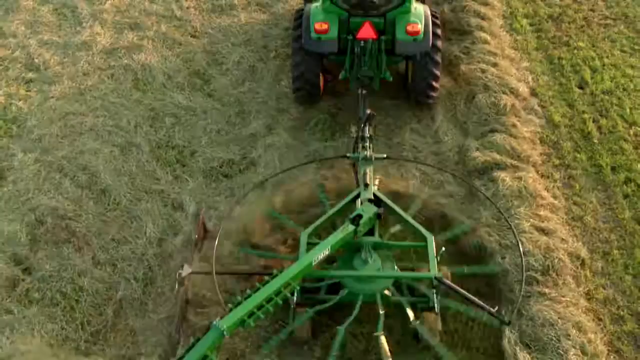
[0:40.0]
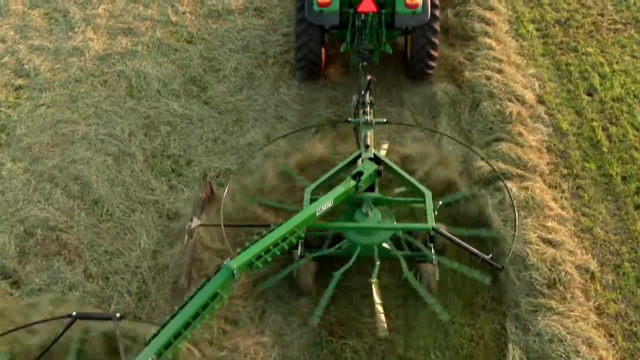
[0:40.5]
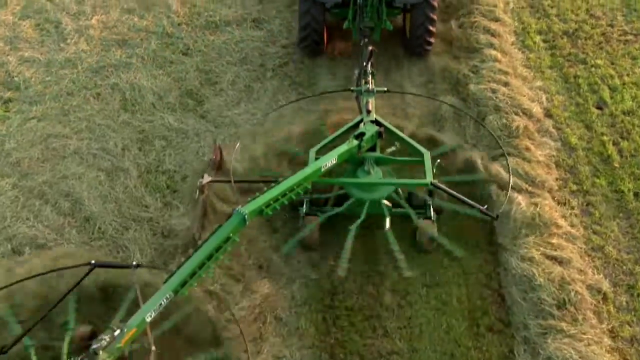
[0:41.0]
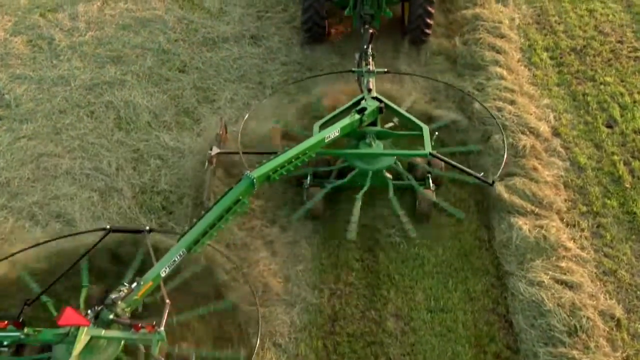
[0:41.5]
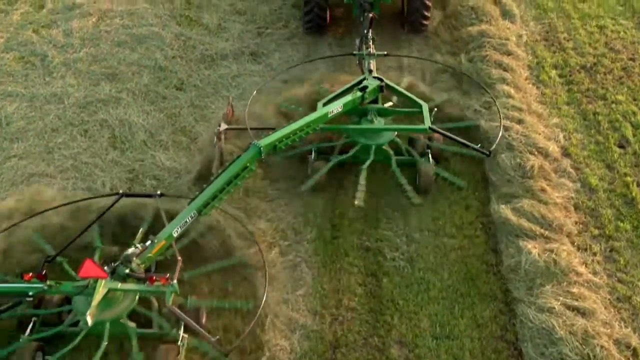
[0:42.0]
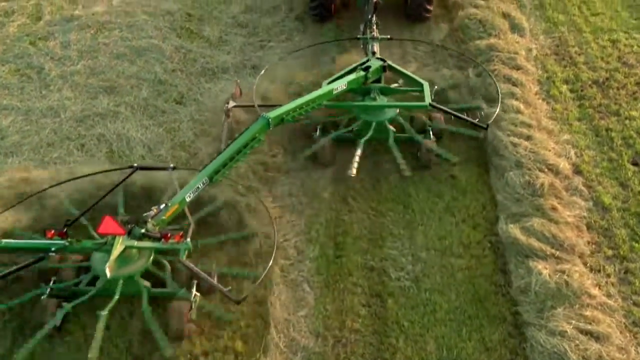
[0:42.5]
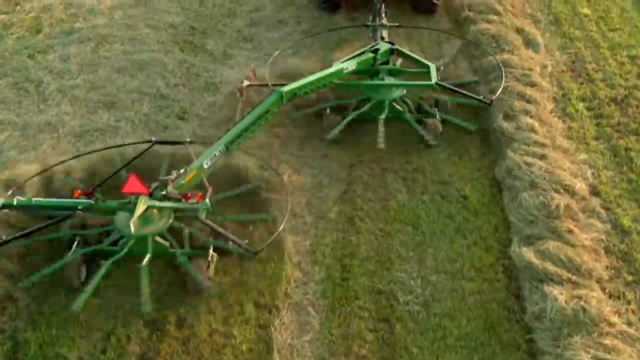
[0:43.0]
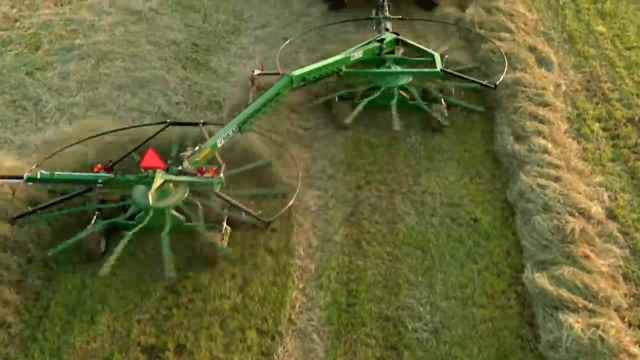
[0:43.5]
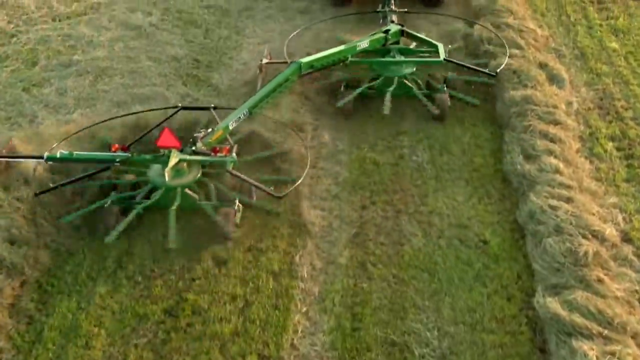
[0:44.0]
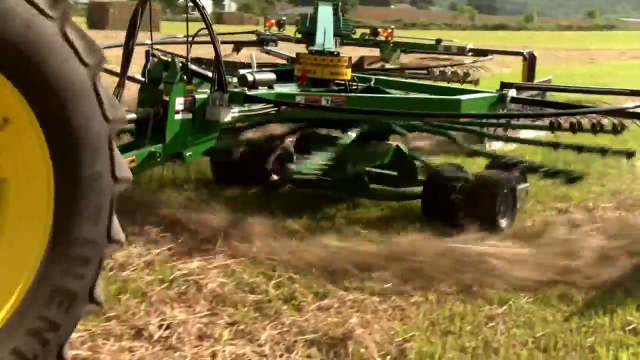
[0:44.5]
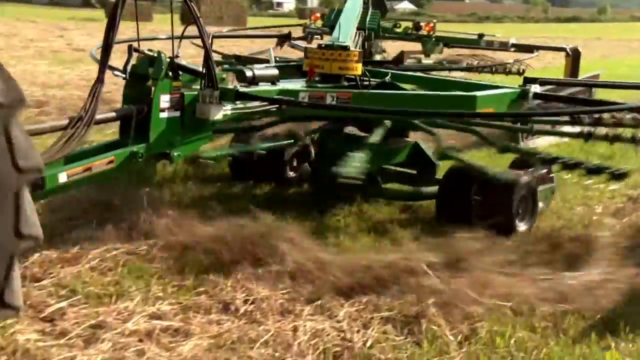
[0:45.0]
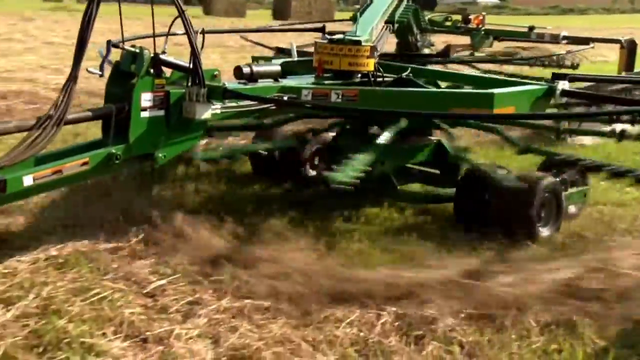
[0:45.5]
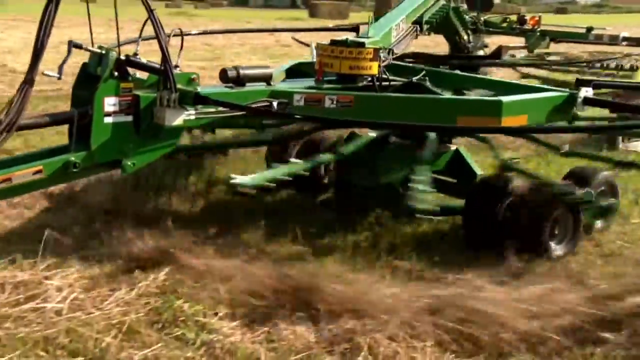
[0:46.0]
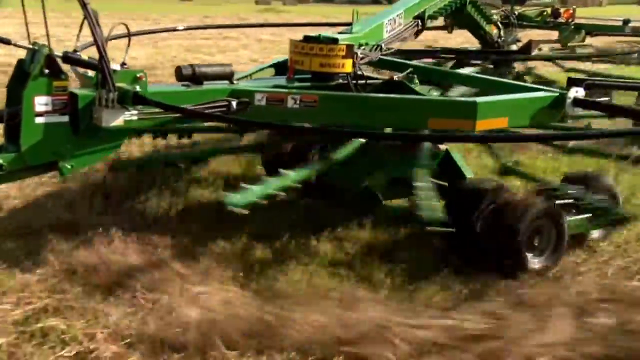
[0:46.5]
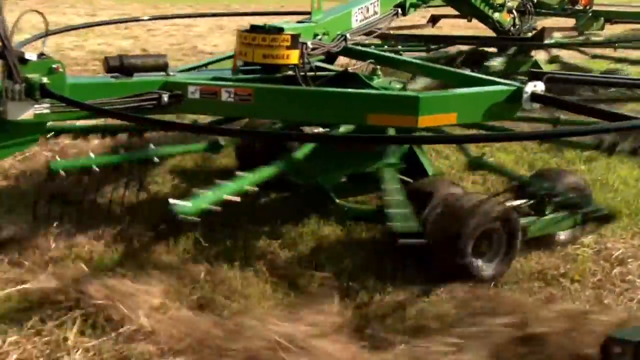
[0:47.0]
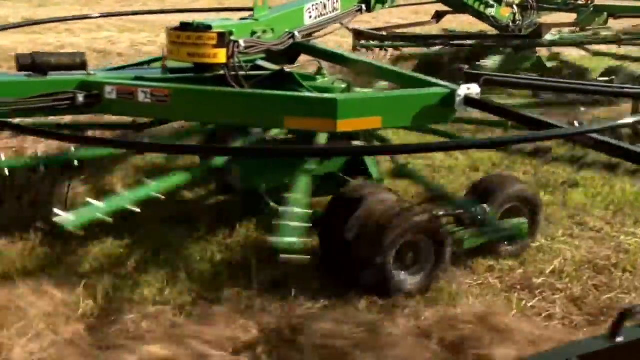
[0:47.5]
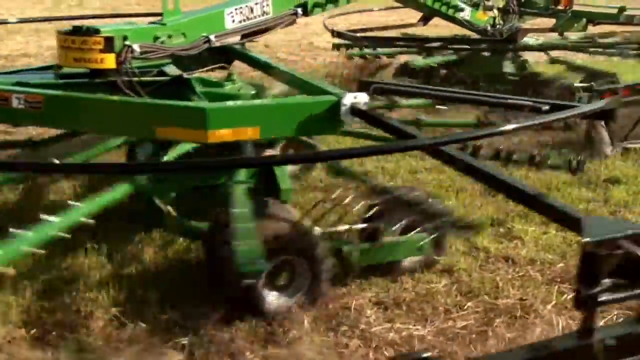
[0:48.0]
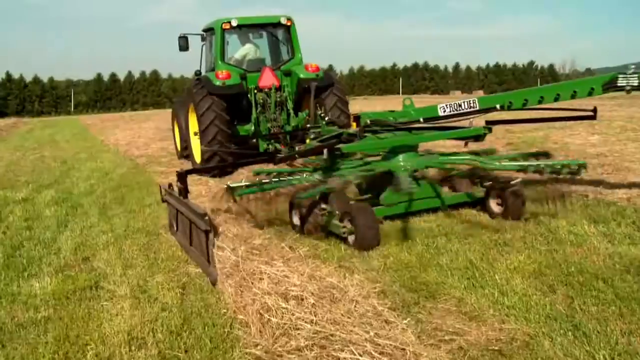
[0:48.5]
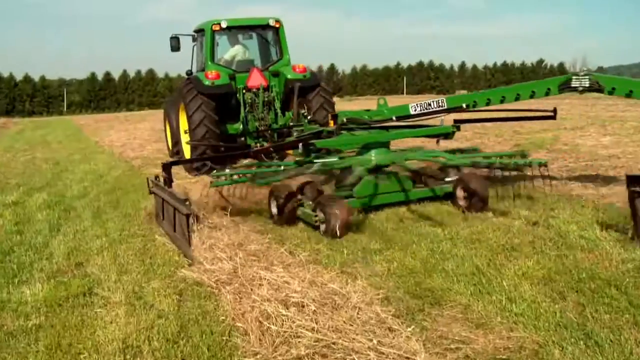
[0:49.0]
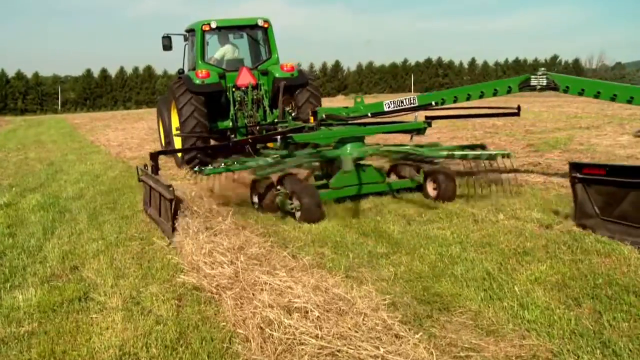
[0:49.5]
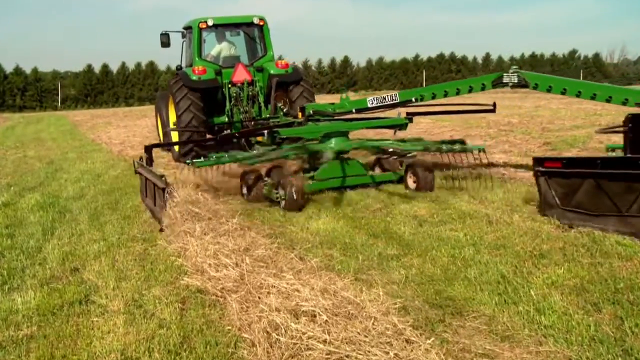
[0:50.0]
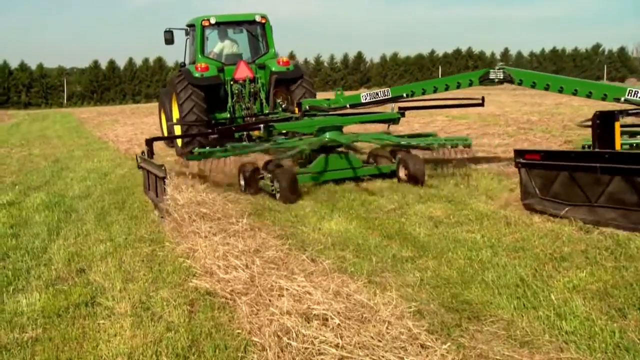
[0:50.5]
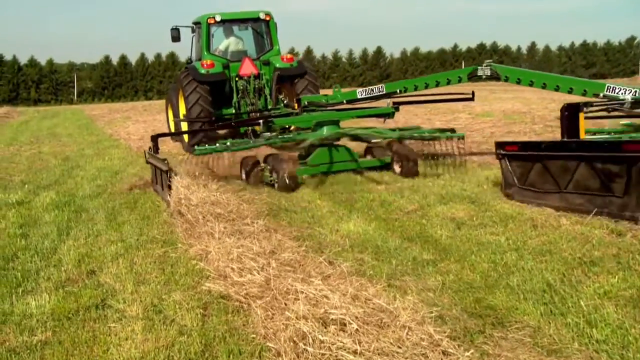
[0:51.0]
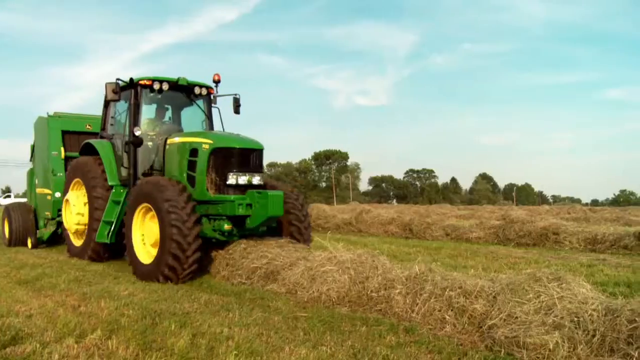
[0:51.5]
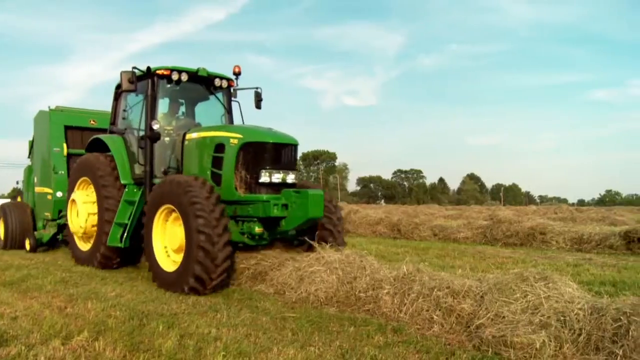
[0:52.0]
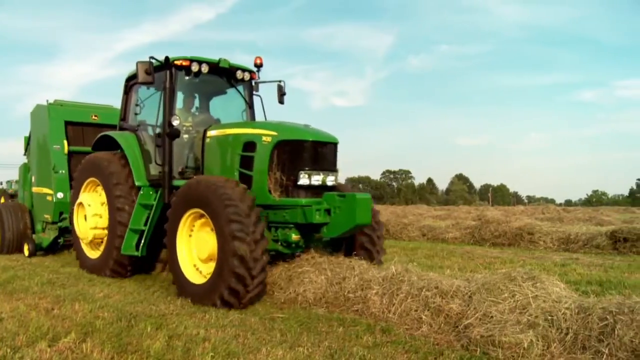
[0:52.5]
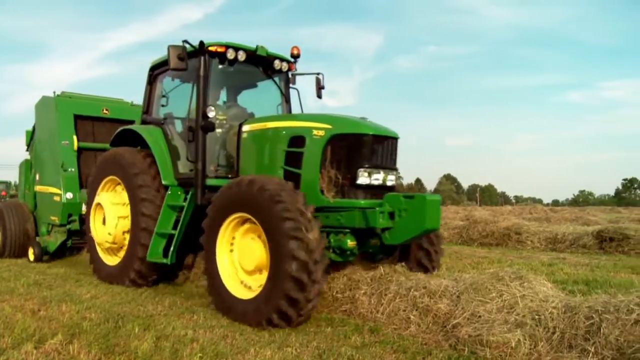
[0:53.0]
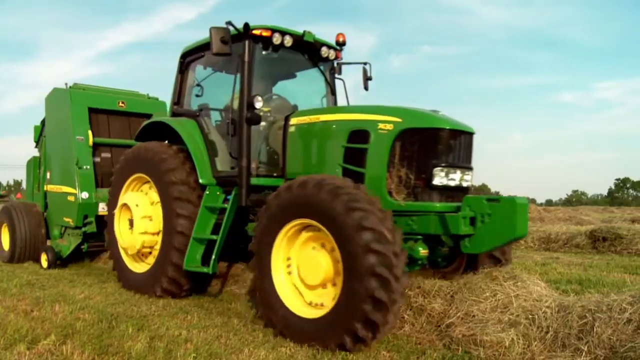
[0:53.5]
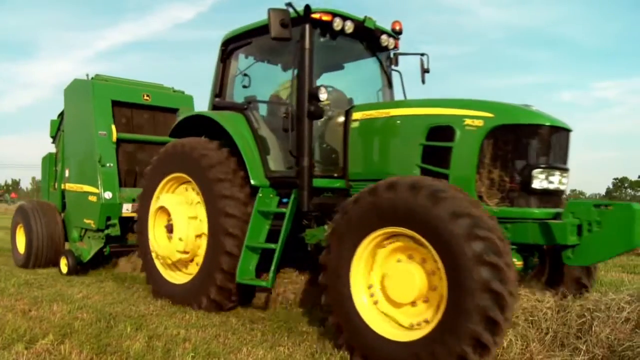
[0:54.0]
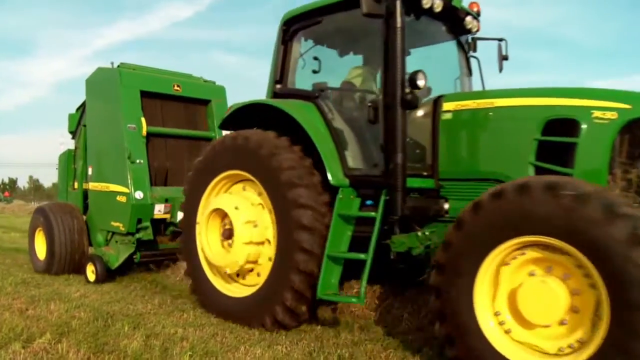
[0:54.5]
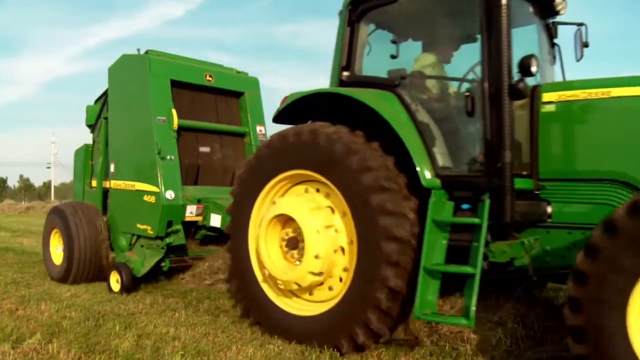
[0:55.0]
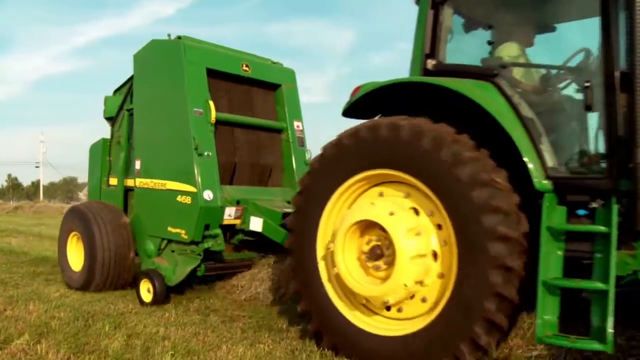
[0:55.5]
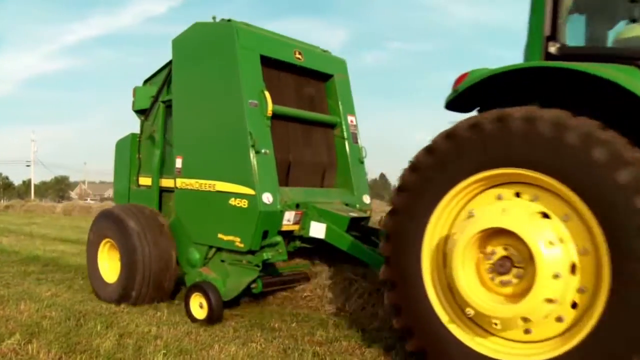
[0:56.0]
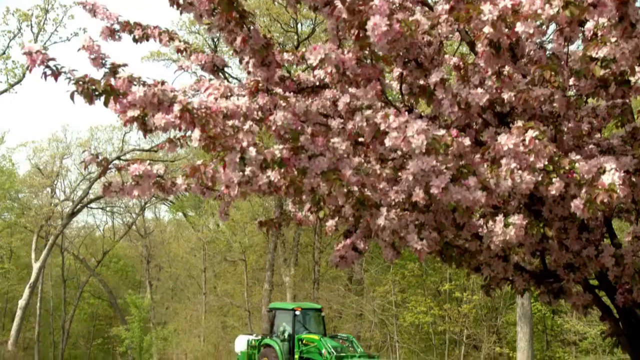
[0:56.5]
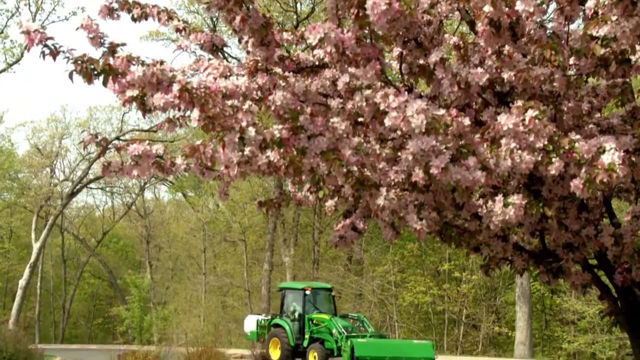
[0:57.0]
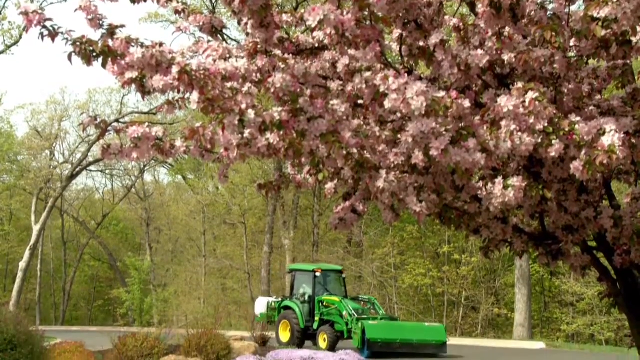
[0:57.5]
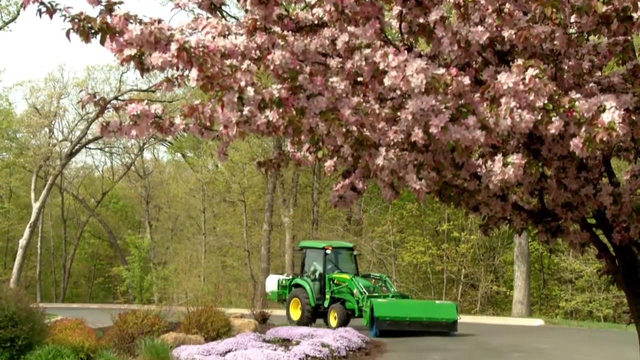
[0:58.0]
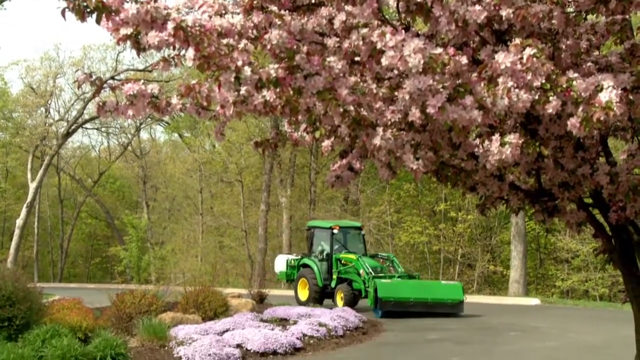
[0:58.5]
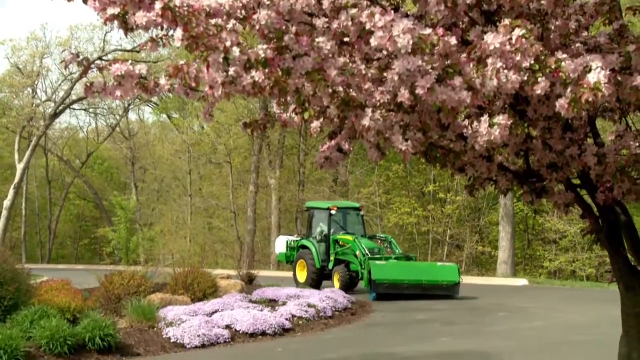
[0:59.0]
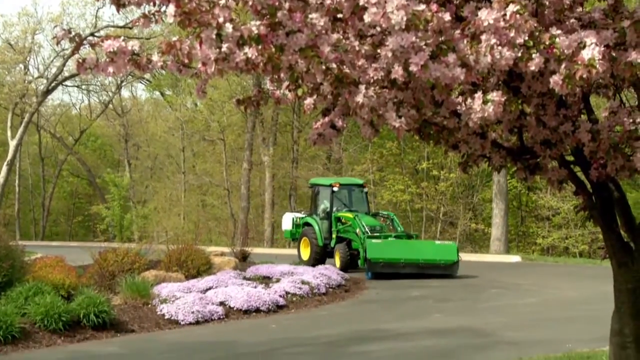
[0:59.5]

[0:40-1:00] A tractor drives through musty green grass with a green machine attached to it whose blades are spinning or rotating at all times; everywhere they pass they leave much brighter green grass, so they seem to be cutting it to keep the fields in better shape. Next, a huge tractor has a big green machine with two small wheels on the front and two huge wheels on the back; it looks sort of like a box that collects some brown stuff from the fields. Then a green tractor with a device attached to the front passes along cemented roads, with many green trees in the background, a tree with light pink leaves in the front, and small pink plants next to the tractor.